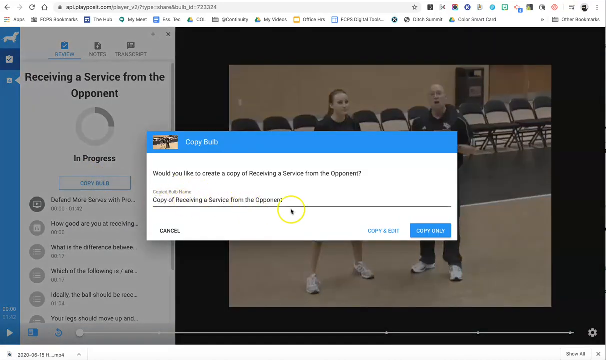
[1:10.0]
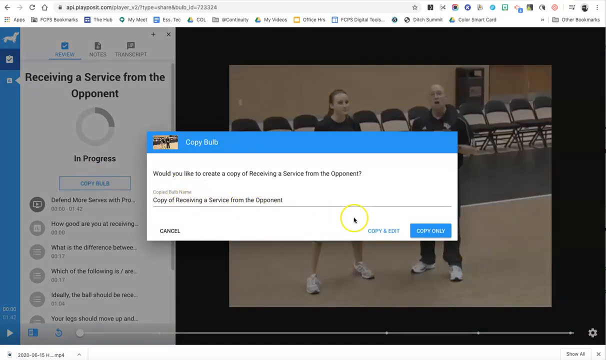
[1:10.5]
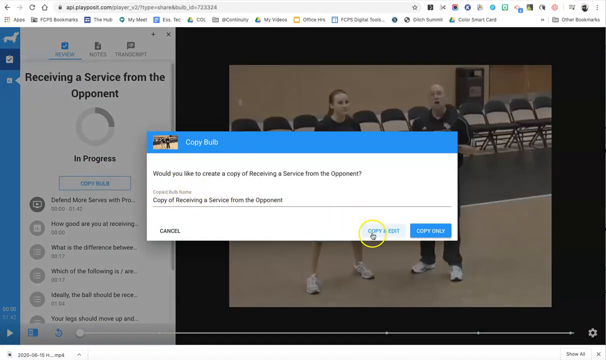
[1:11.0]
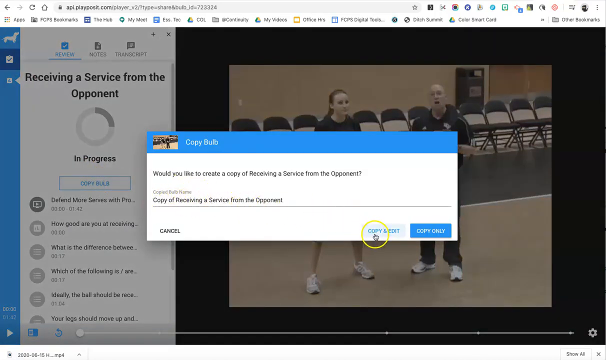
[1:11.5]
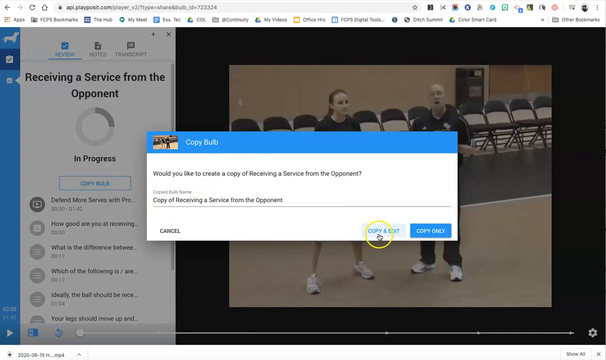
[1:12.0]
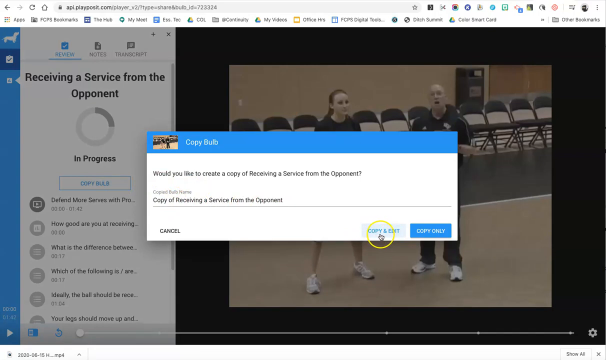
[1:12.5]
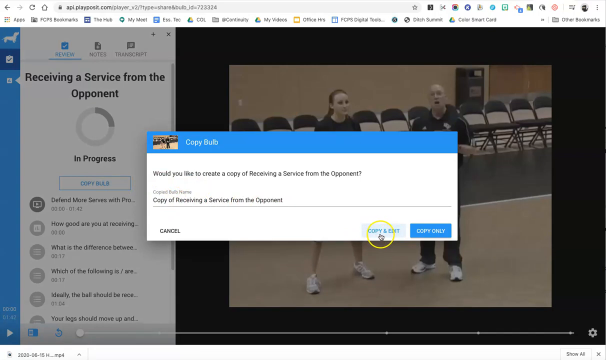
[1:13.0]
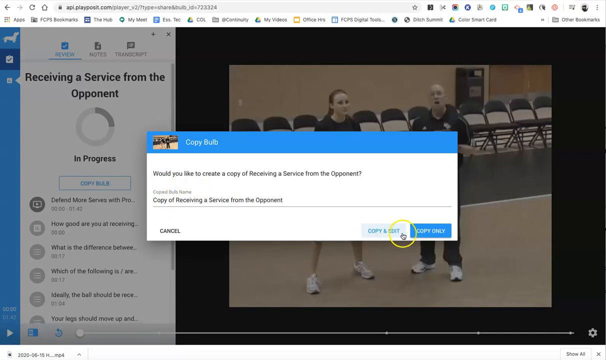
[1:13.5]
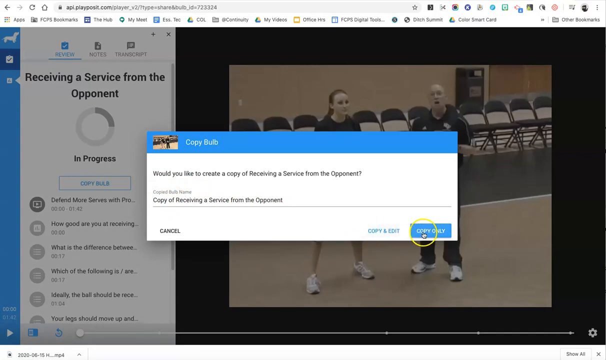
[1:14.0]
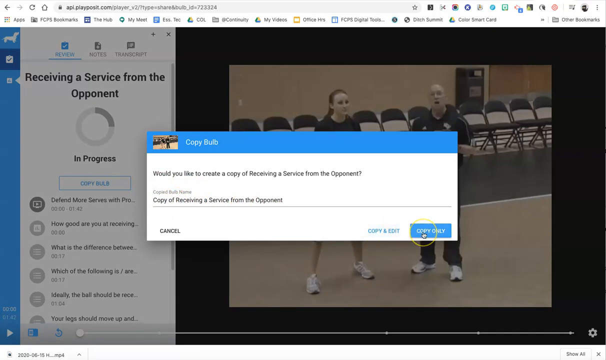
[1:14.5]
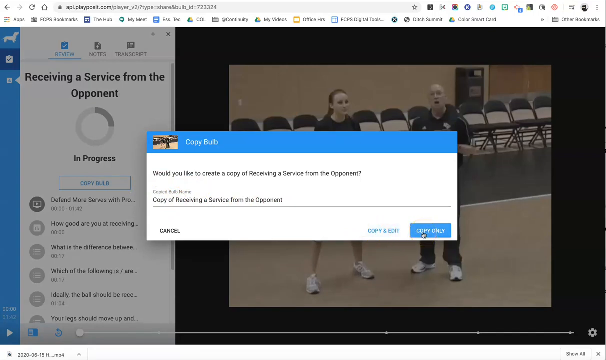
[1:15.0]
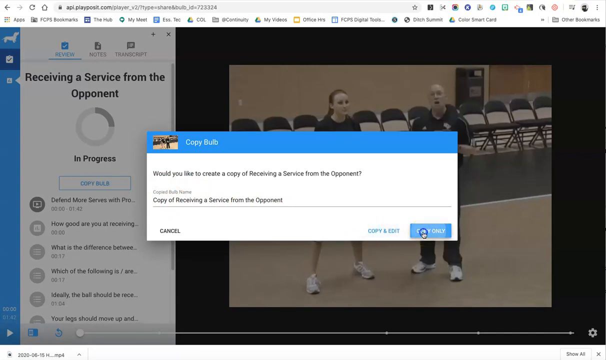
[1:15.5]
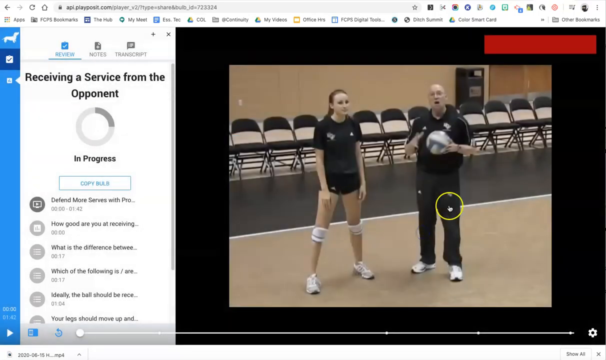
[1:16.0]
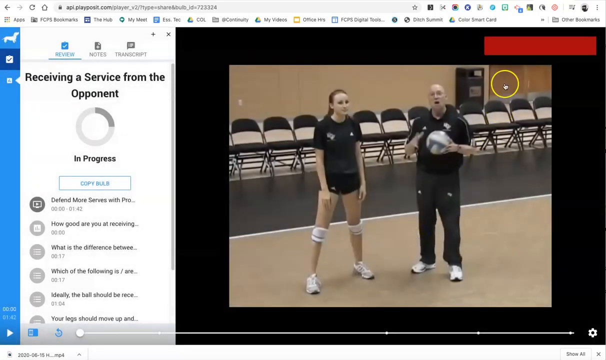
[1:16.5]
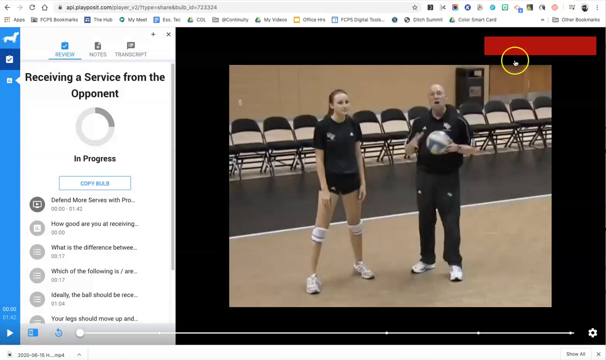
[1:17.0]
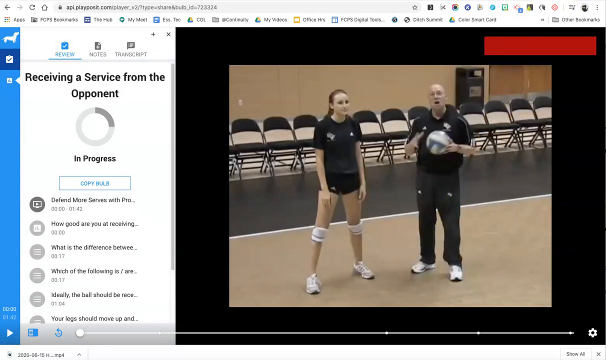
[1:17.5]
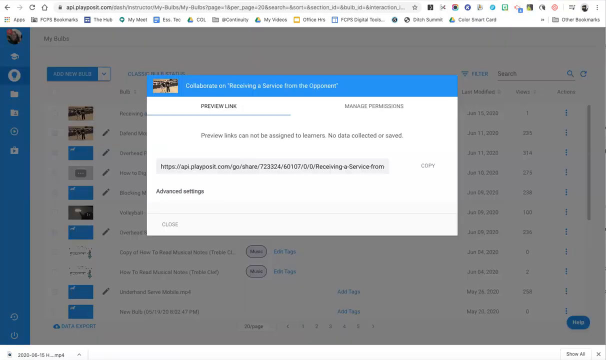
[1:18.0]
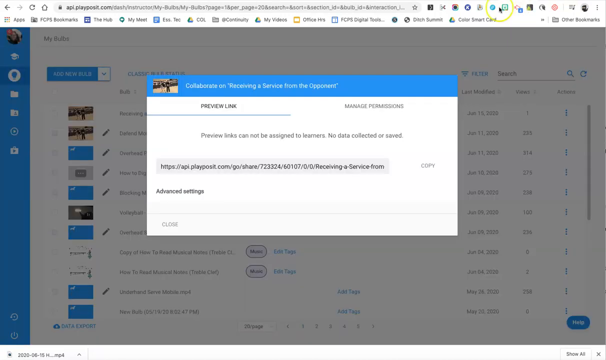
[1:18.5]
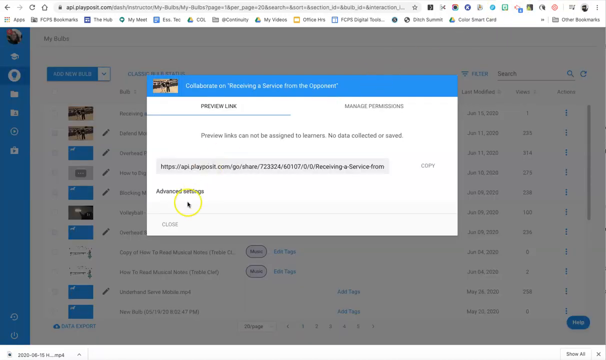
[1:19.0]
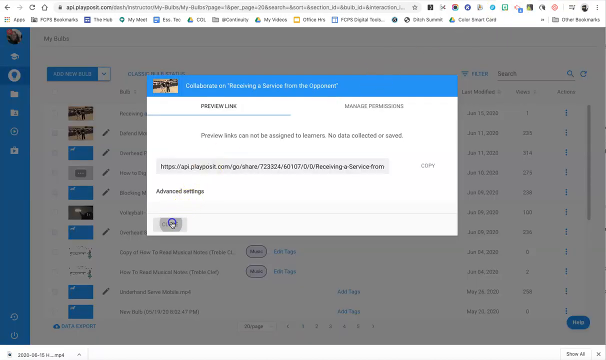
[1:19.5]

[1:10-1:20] A dialog box pops up on the screen with a blue border at the top that says "Copy Bulb" and a thumbnail of what looks to be a still from a video. Below the blue panel is a gray box that says "Would you like to create a copy of Receiving a Service from the Opponent?", which seems to be the title of the file. A line below is written with the copy's name as a copy of Receiving a Service from the Opponent. In the bottom right-hand corner of the dialog box are the choices "Copy Only" and "Copy and Exit", and in the bottom left-hand corner is "Cancel". The cursor hovers over Copy and Exit and over Copy Only, then clicks Copy Only. It then moves to the earlier dialog box and clicks Close. The cursor is a yellow circle with an arrow inside it.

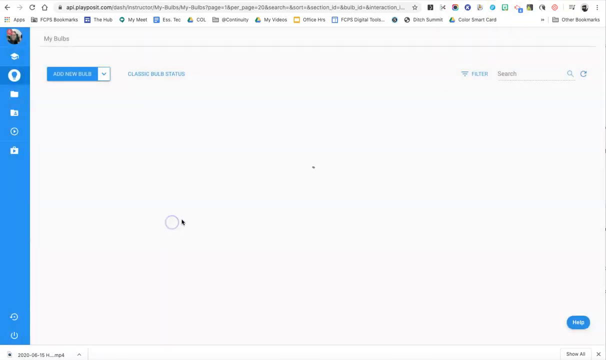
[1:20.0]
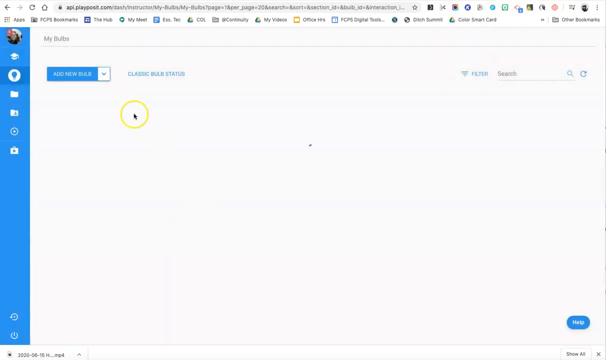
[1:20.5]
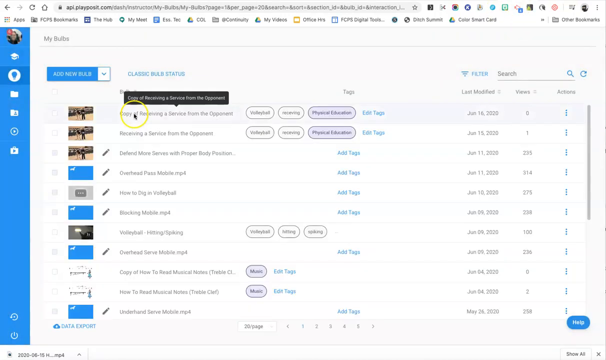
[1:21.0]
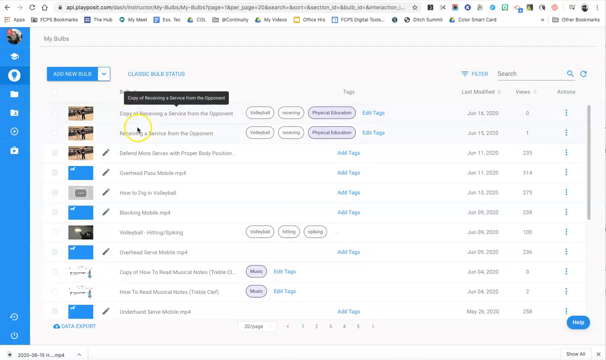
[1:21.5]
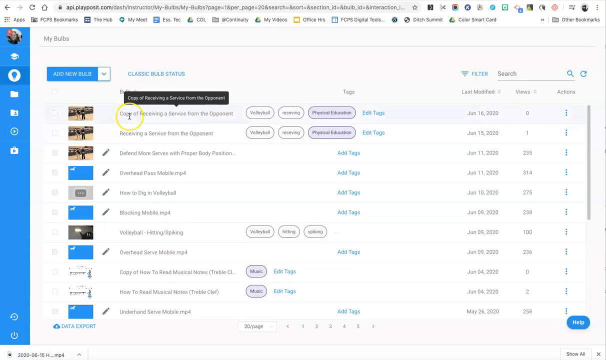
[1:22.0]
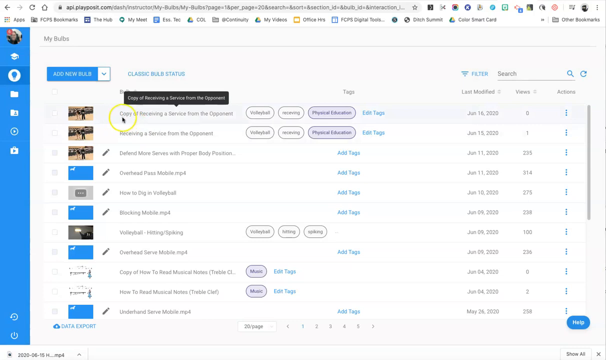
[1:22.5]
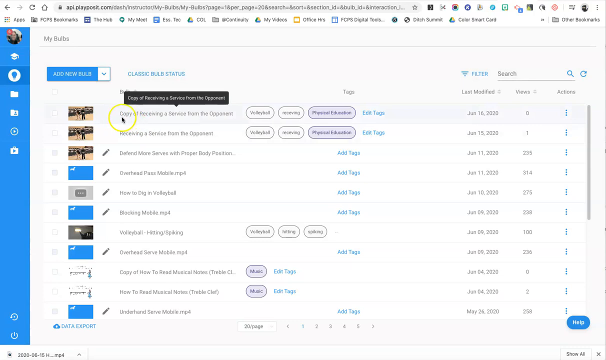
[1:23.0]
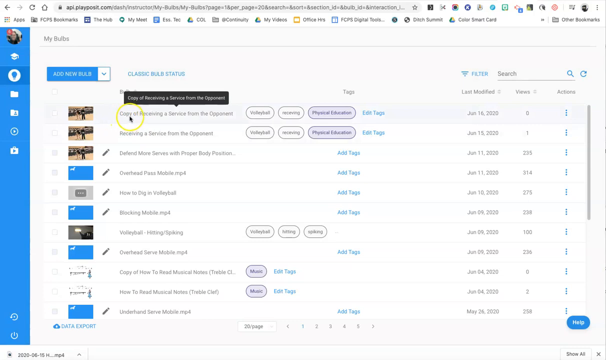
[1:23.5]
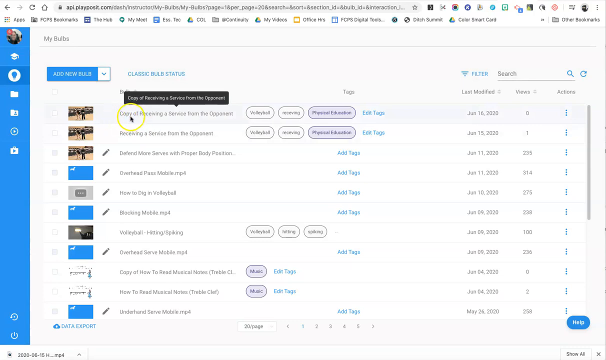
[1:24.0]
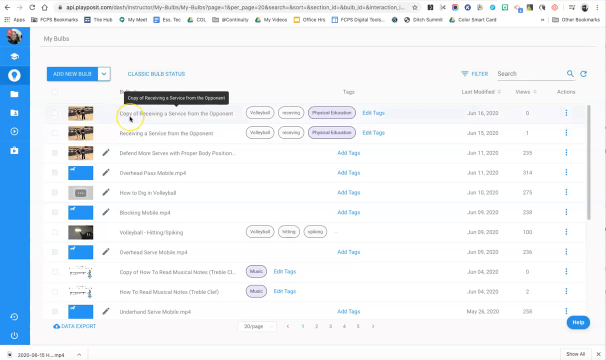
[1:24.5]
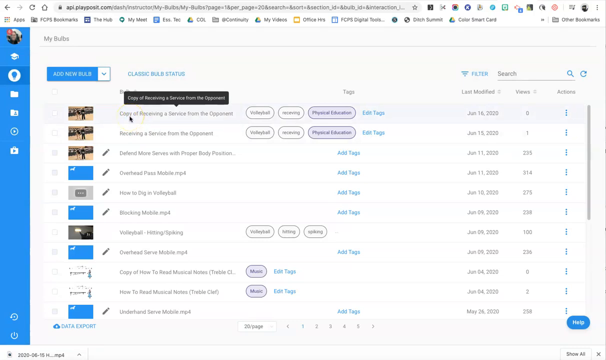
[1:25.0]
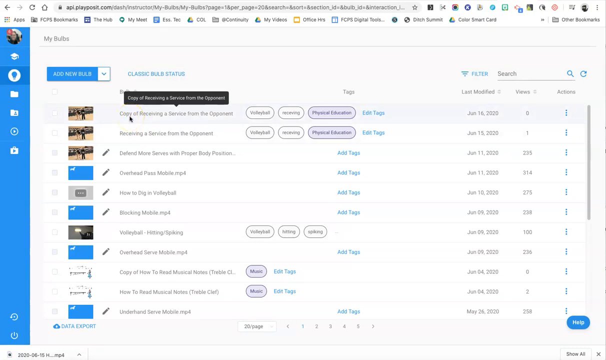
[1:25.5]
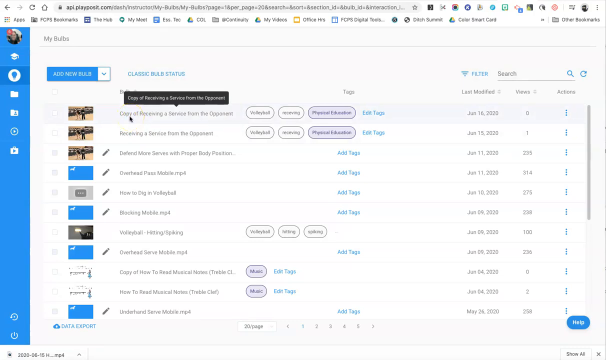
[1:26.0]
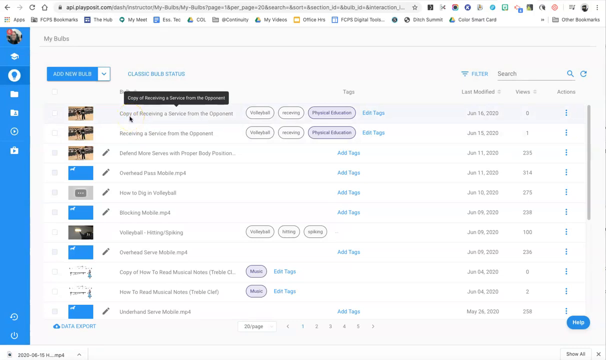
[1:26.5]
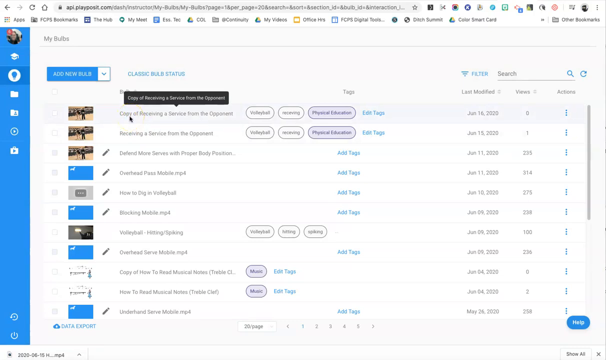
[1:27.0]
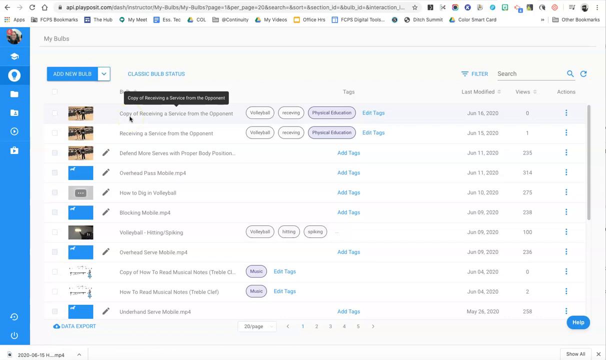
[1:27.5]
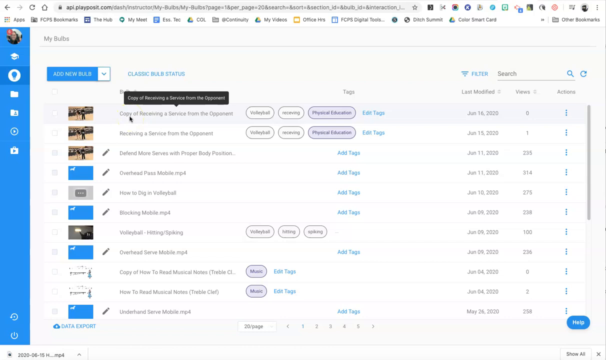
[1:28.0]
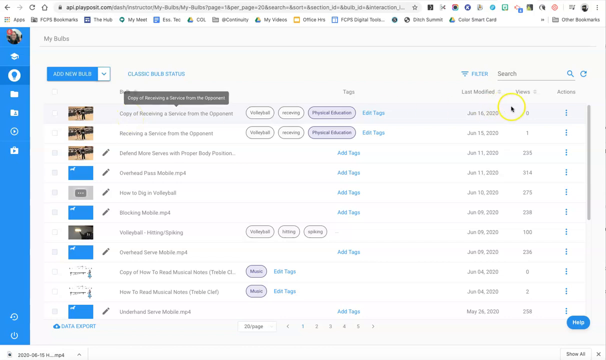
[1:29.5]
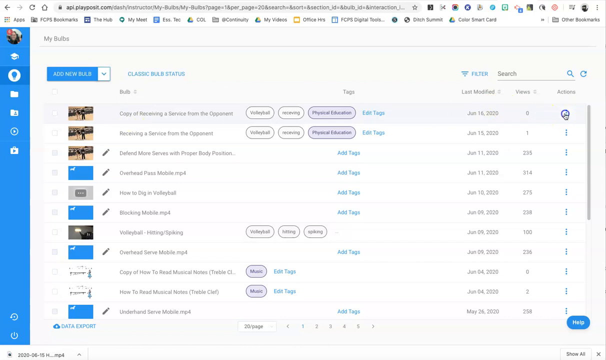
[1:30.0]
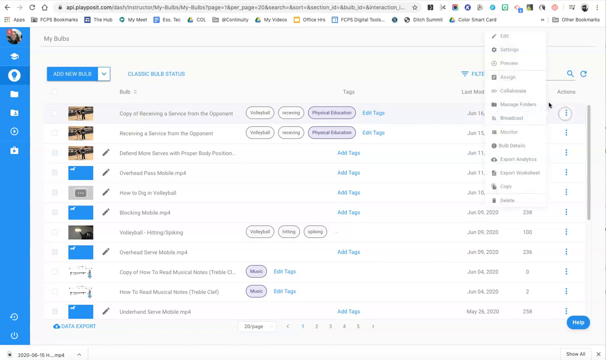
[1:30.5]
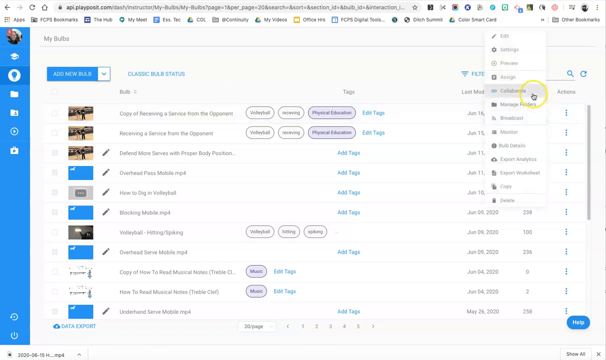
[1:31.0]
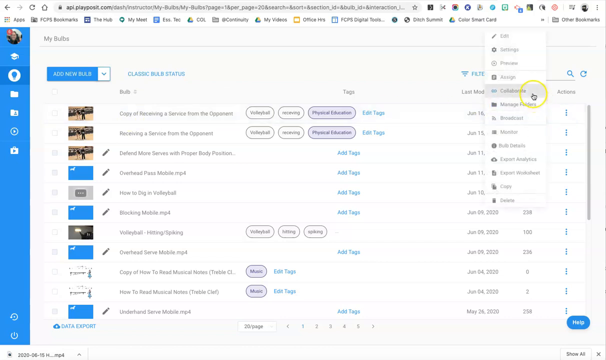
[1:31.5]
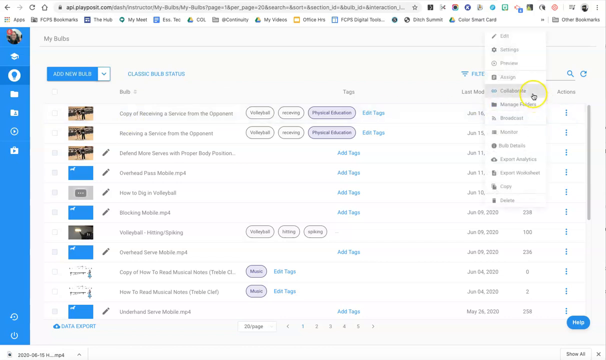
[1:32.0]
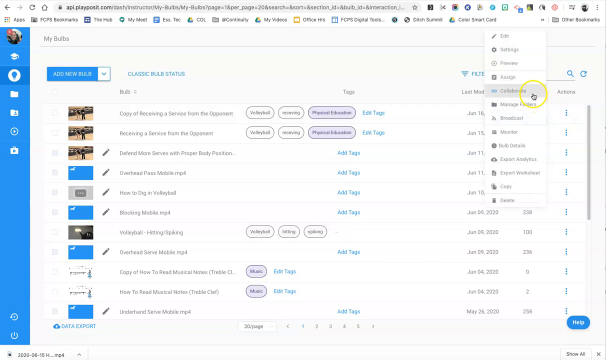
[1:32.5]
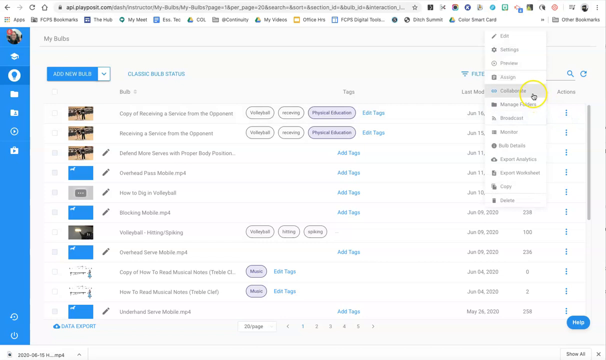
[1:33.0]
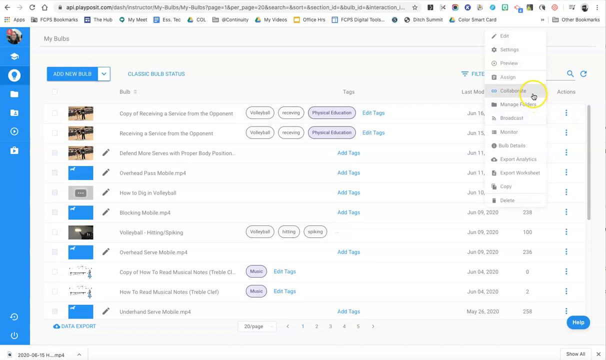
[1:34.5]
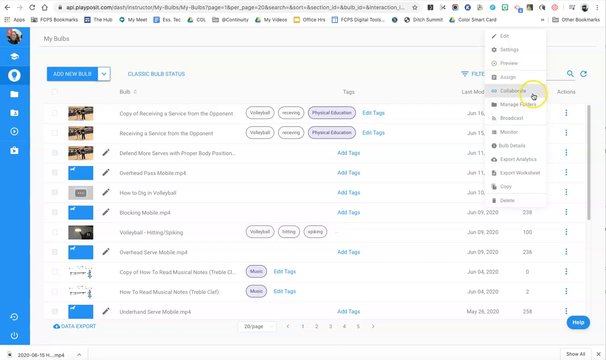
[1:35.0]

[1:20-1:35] An essentially white screen appears inside a program run through PlayPost.com, and it looks to be an individual user's page, with the circle icon in the left-hand corner. A blue panel with six white icons runs down the left-hand side of the screen. The page is titled "My Bulbs", and there is a drop-down box with a blue background and white font that says "Add New Bulb". Next to it is a blue title, "Classic Bulb Status", which looks like a hyperlink. Below is a list of about a dozen thumbnails, each with a different name. The cursor moves underneath the drop-down box and Classic Bulb Status and highlights the top listing. It then goes to the three dots at the very end of the first listing, under "Actions", clicks Actions, opens the menu and clicks Collaborate, which turns gray while the rest of the drop-down categories stay white.